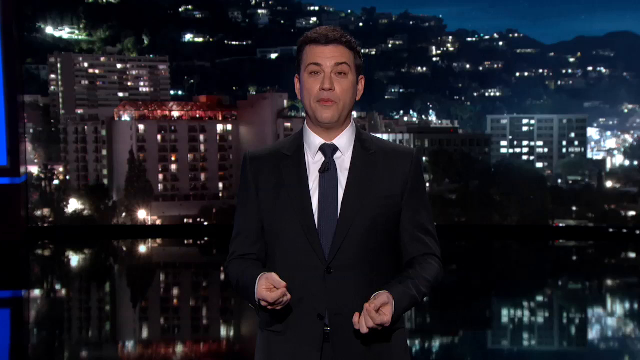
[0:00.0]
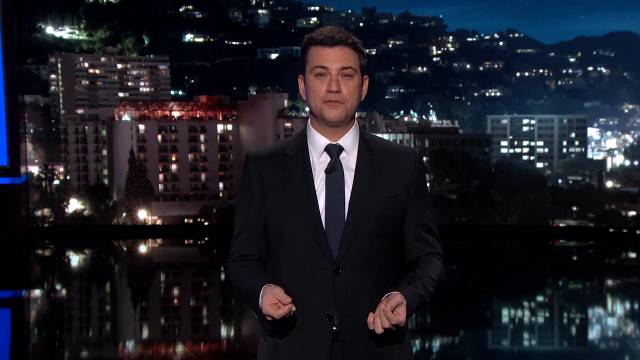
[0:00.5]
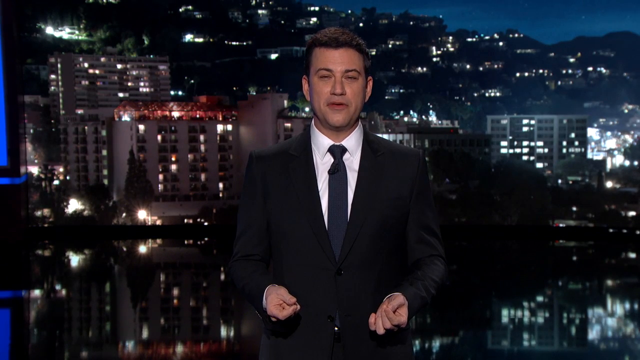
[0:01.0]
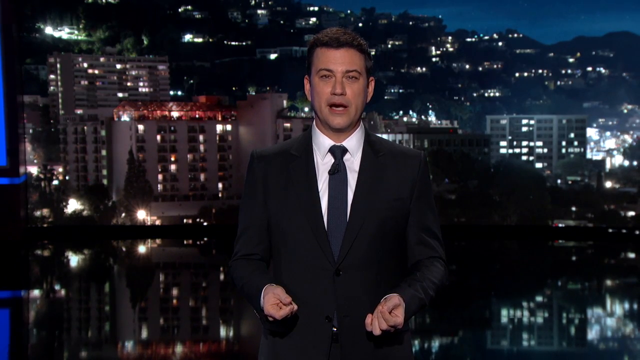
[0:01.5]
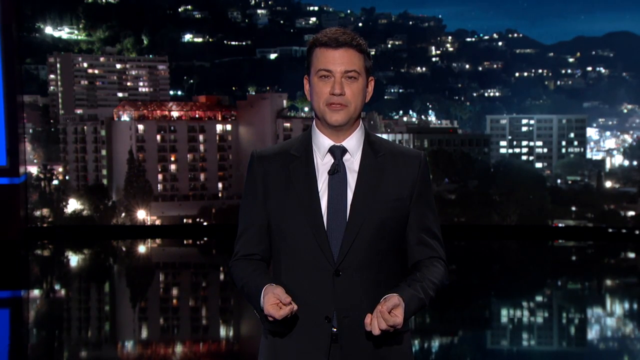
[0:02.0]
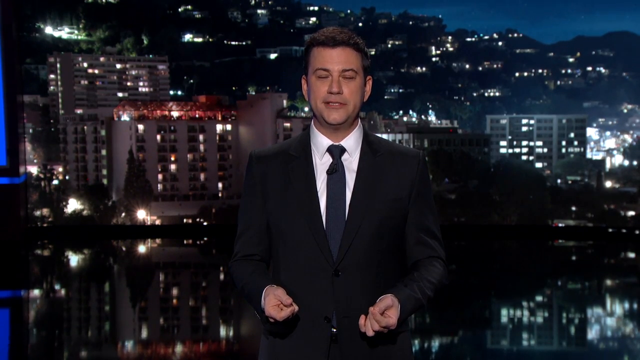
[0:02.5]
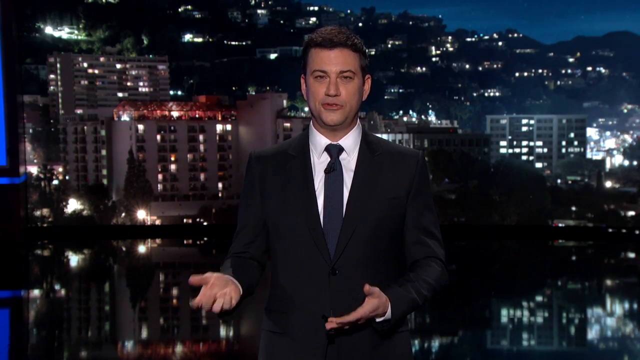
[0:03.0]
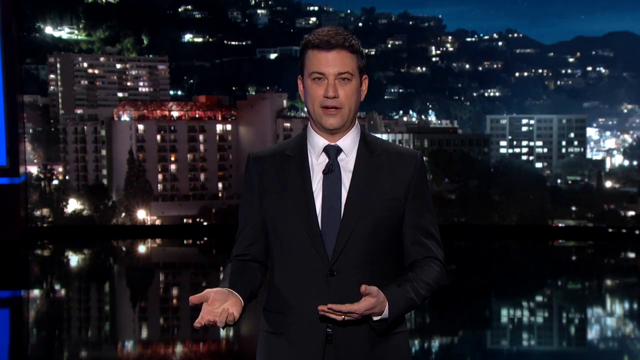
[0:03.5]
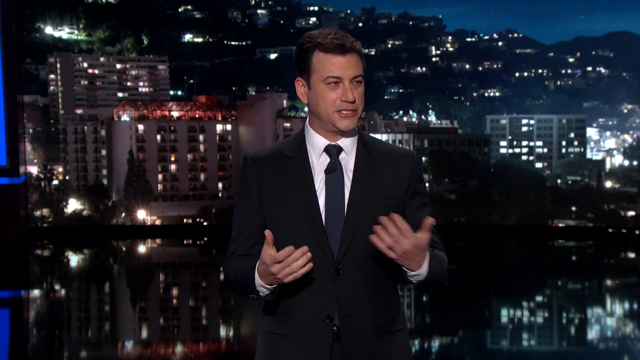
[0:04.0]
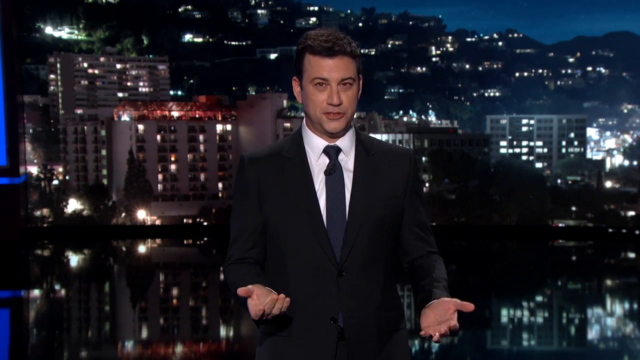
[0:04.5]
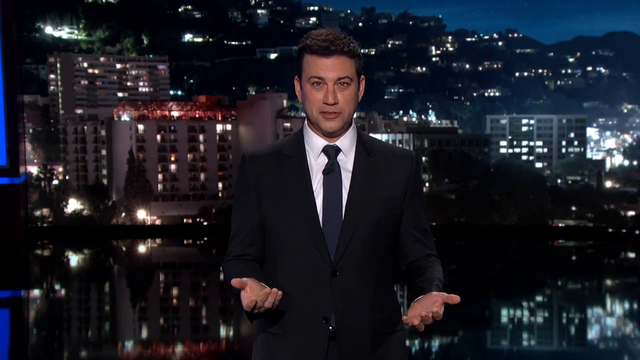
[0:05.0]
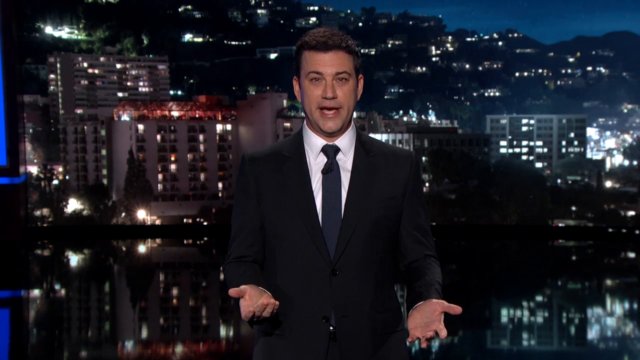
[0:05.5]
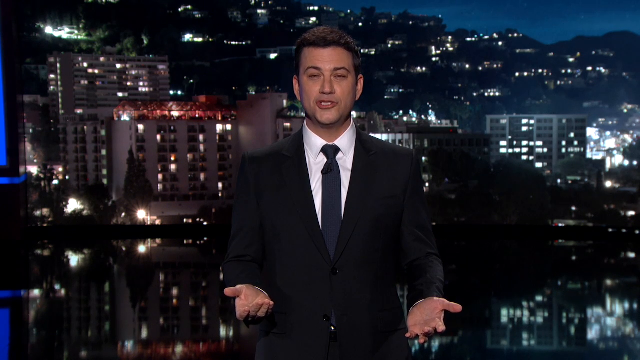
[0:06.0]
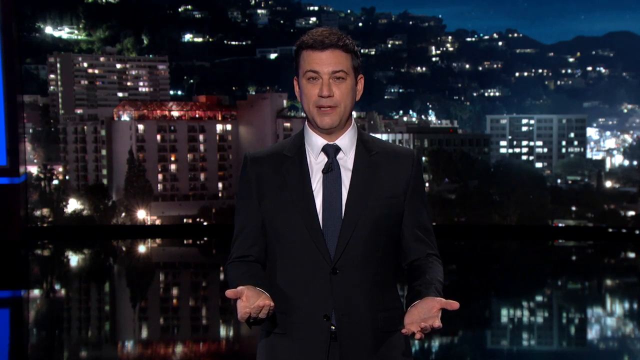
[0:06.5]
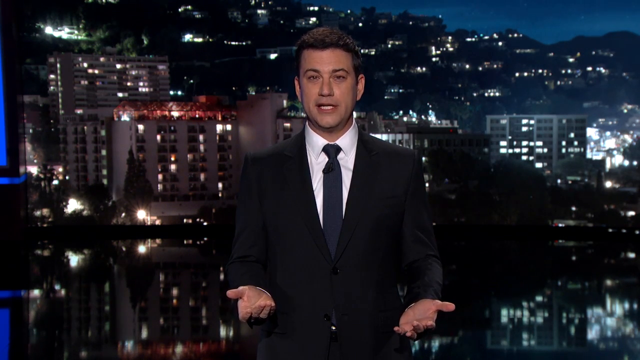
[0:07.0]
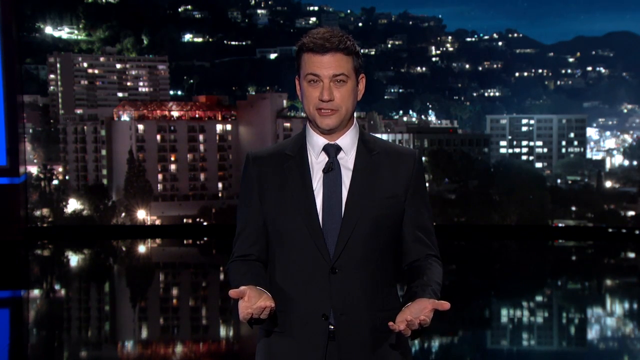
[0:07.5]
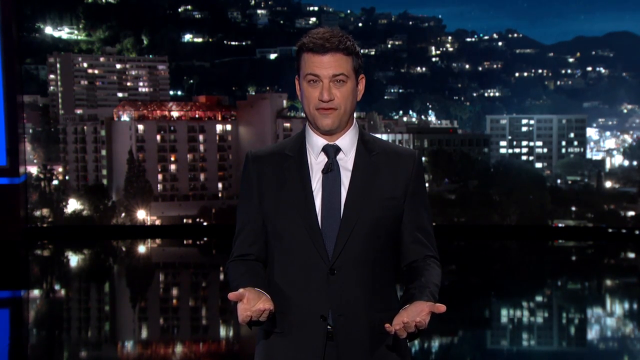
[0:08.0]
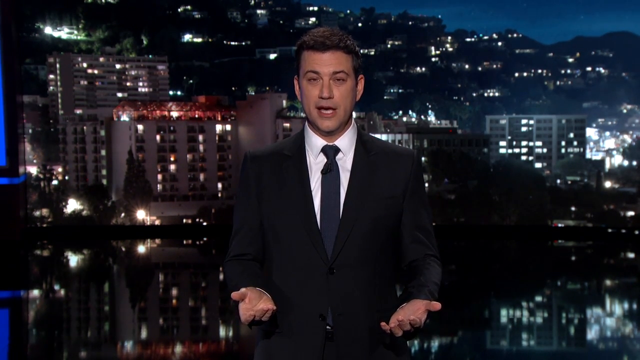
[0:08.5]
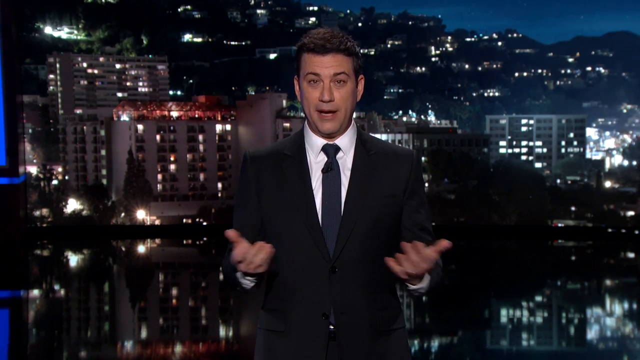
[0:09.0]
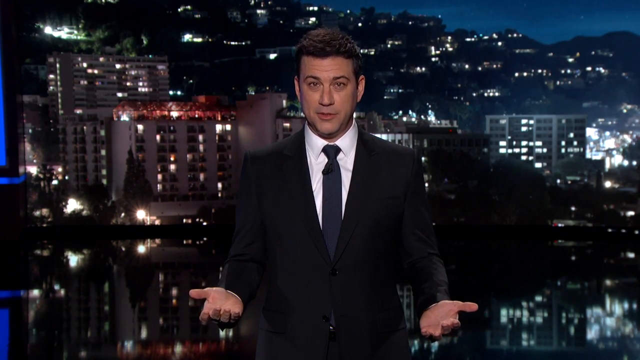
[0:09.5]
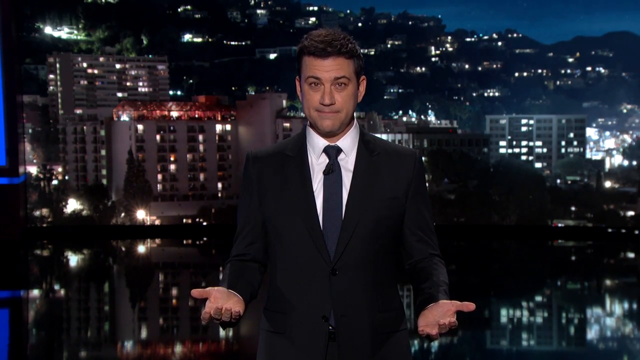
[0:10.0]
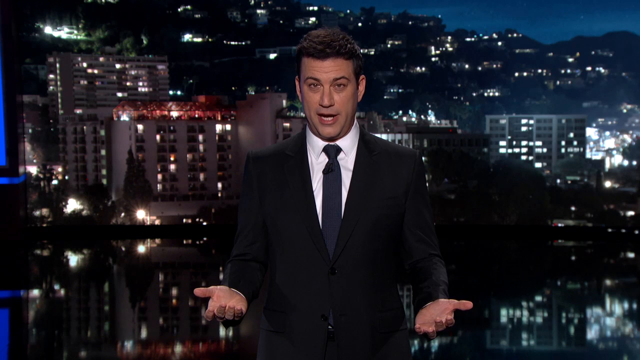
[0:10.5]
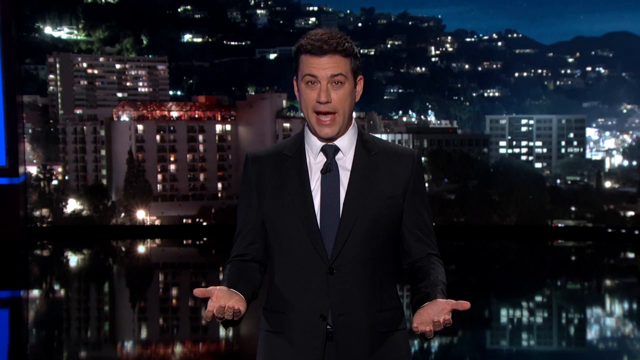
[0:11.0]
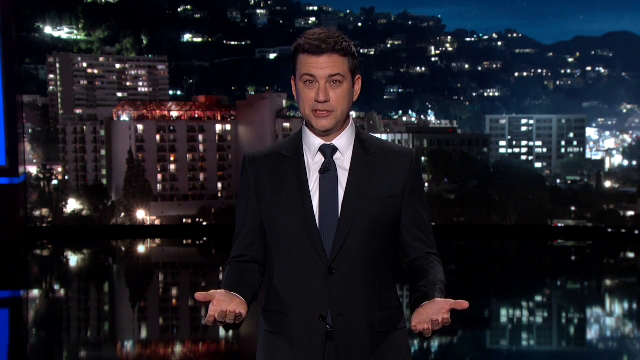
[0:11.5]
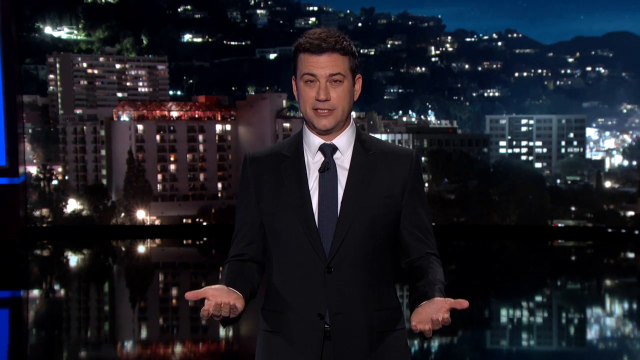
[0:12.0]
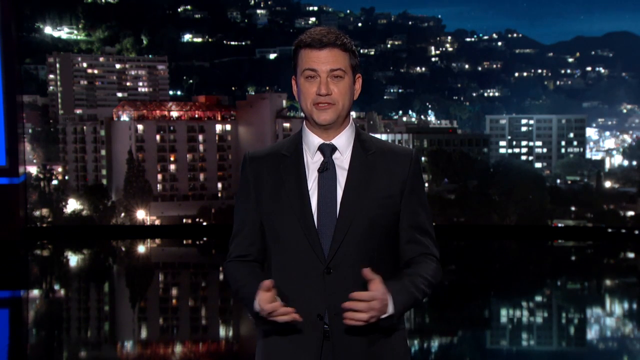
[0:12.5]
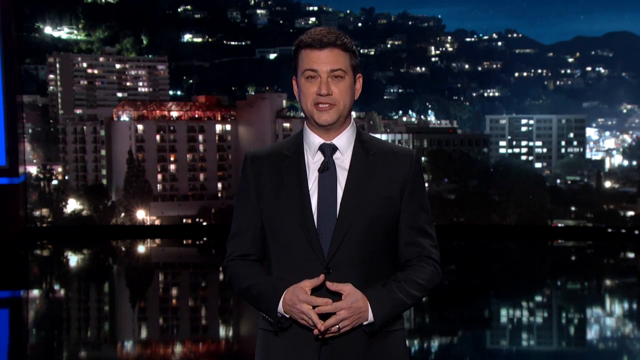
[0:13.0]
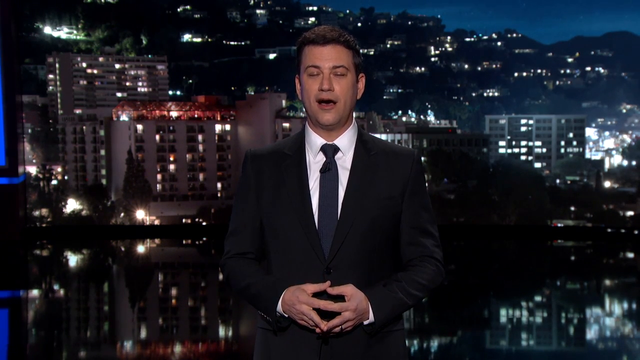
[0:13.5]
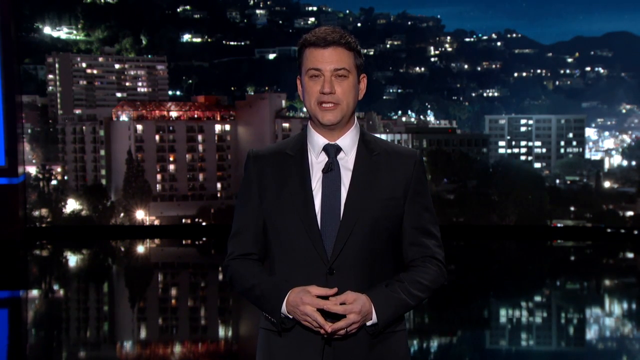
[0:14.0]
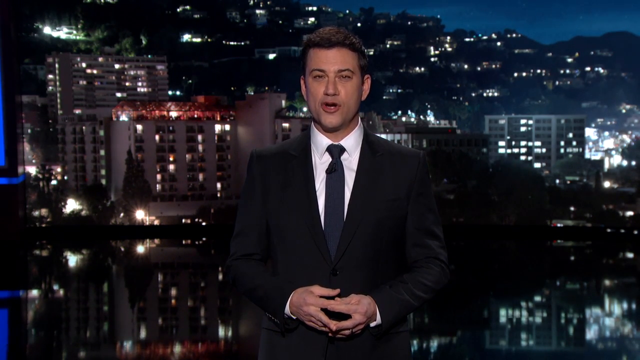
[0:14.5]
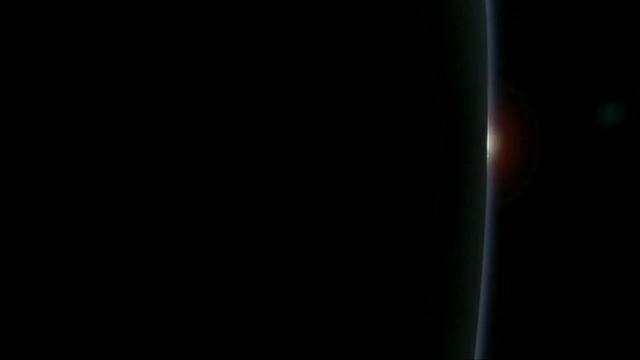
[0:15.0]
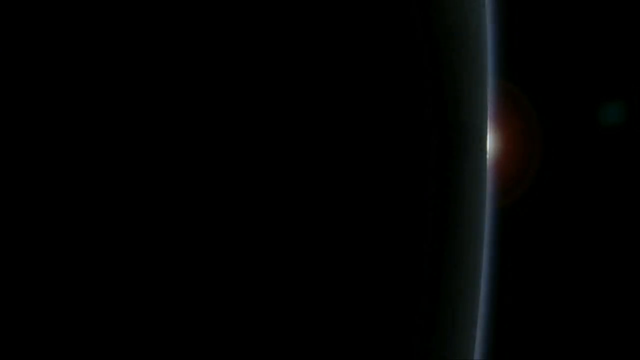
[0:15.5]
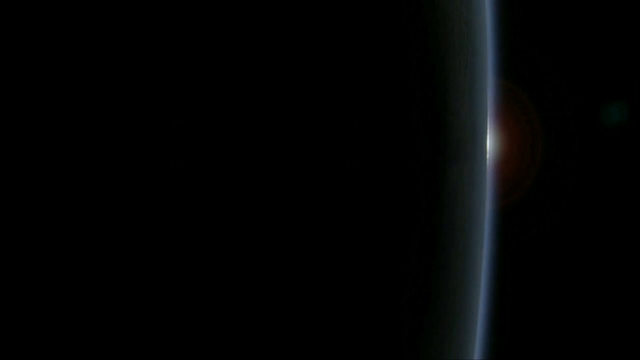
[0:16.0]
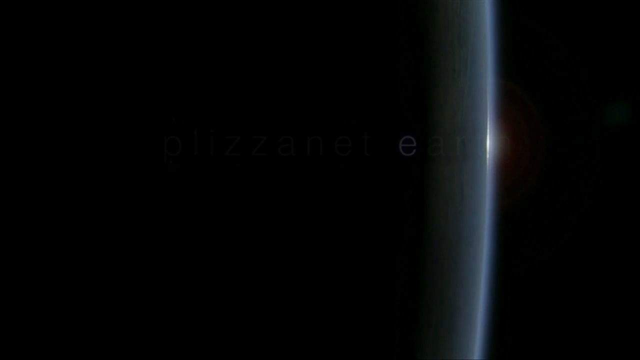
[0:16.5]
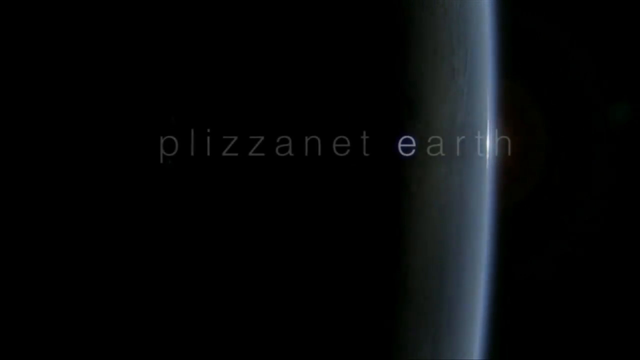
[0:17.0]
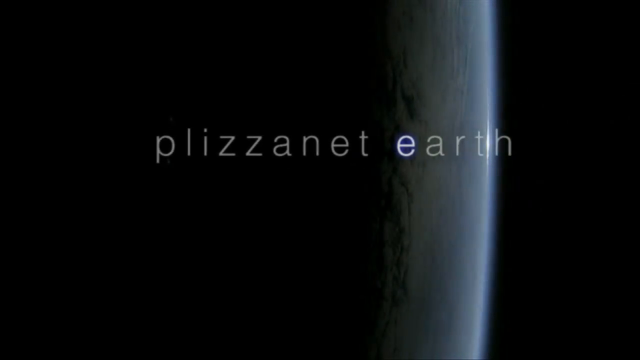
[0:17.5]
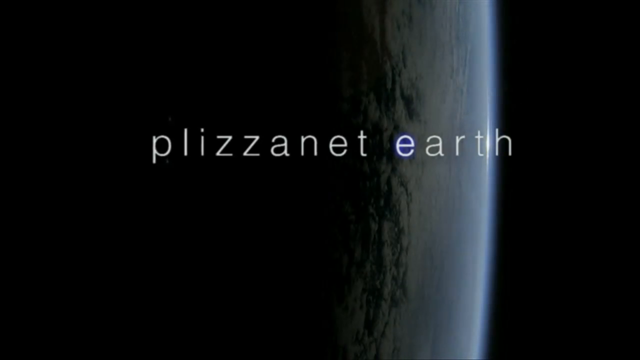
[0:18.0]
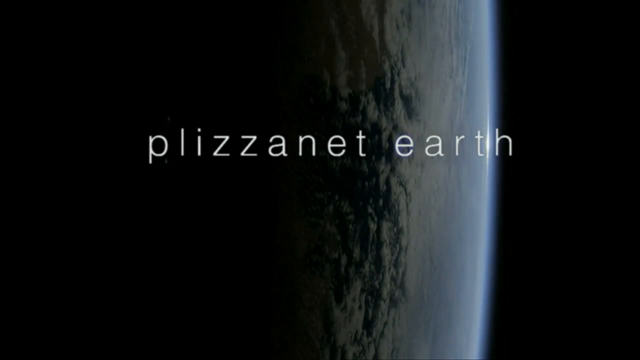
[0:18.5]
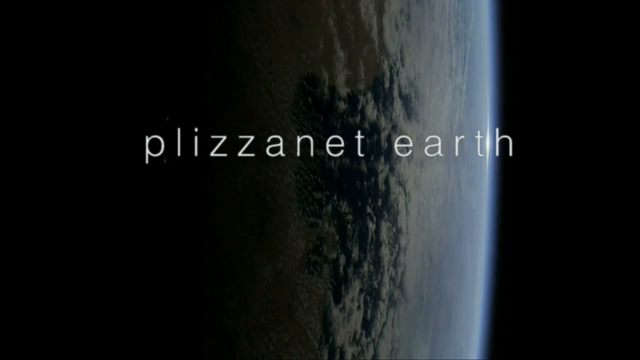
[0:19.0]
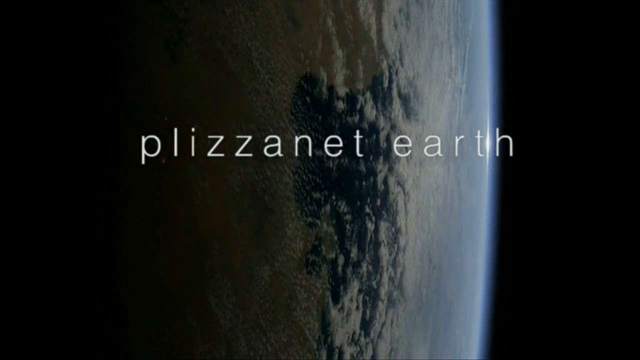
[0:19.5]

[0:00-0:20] A very young boy, possibly a news representative, is talking and describing something.